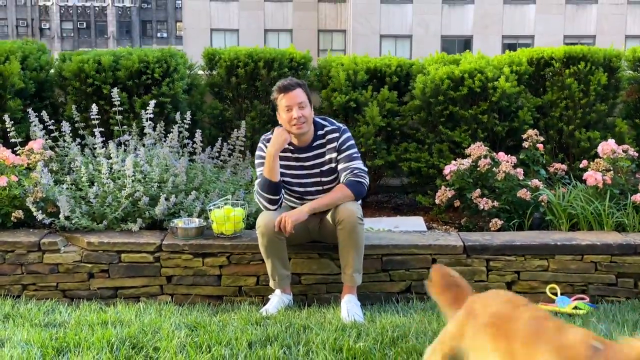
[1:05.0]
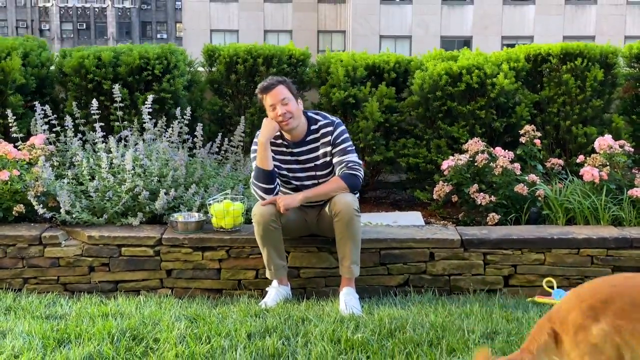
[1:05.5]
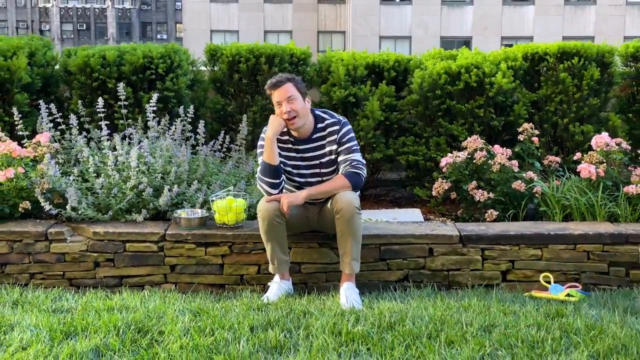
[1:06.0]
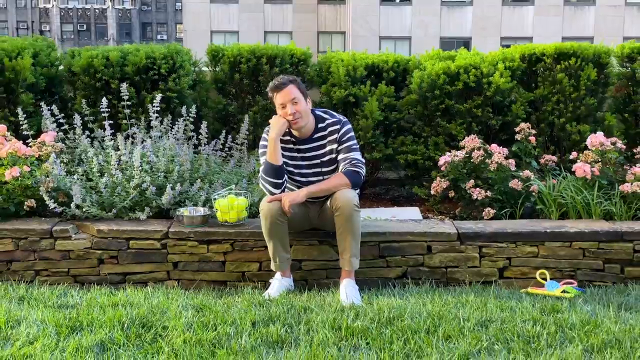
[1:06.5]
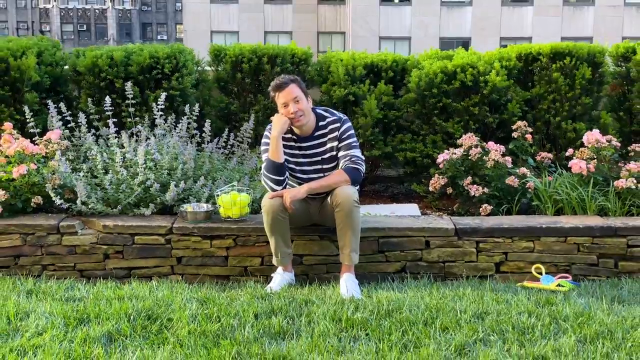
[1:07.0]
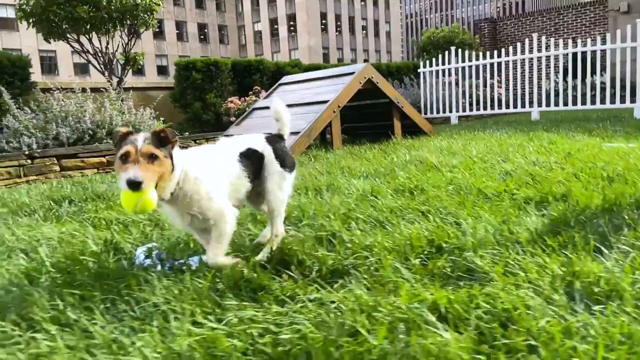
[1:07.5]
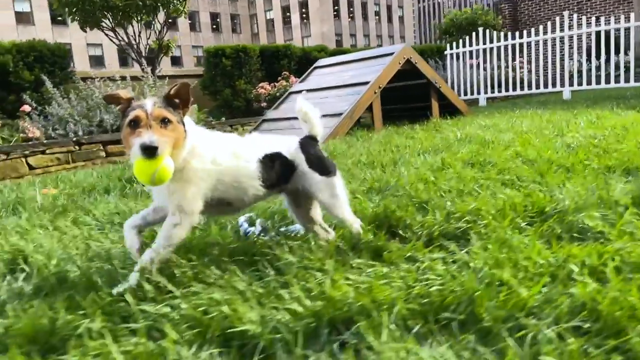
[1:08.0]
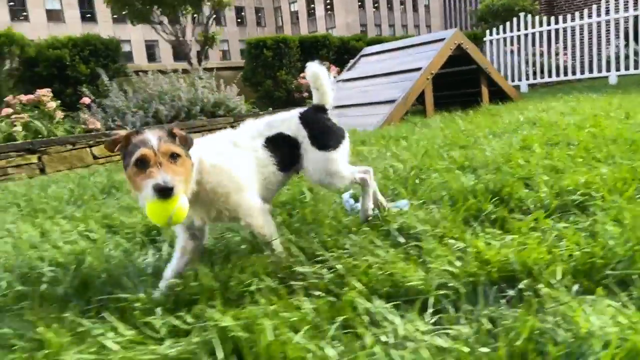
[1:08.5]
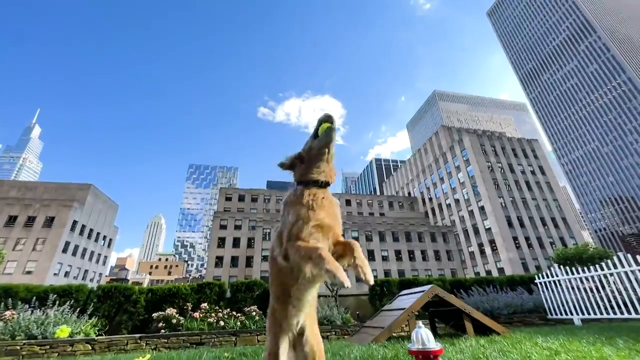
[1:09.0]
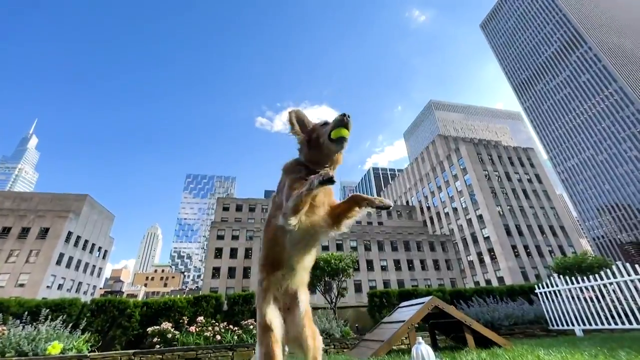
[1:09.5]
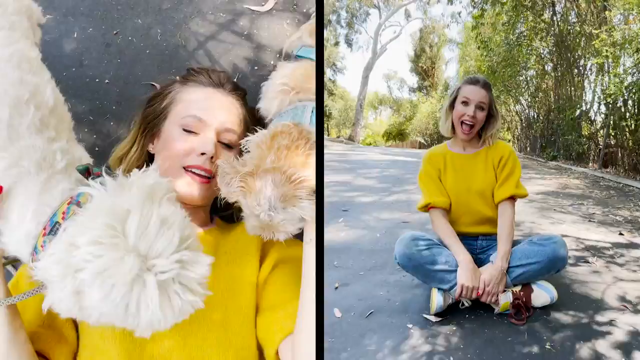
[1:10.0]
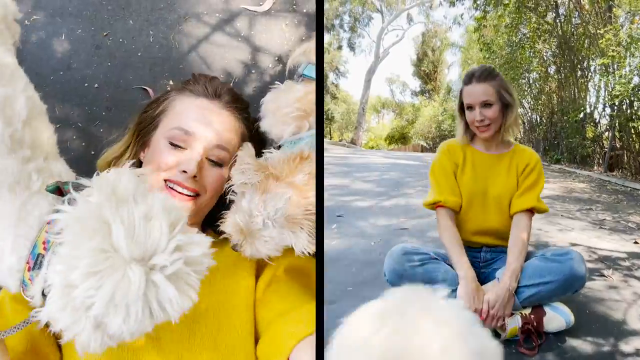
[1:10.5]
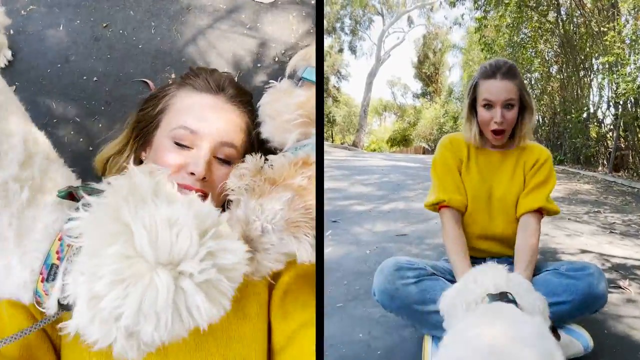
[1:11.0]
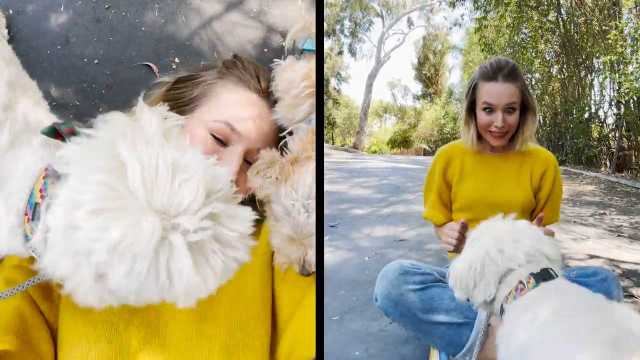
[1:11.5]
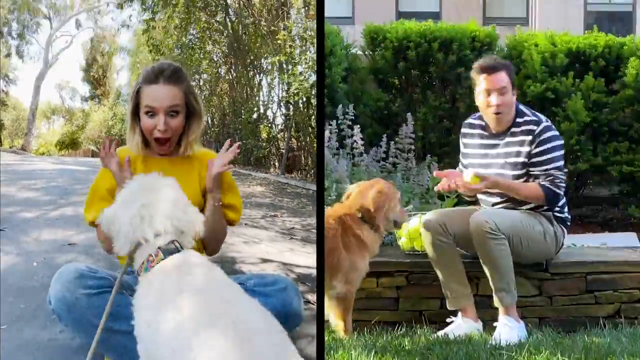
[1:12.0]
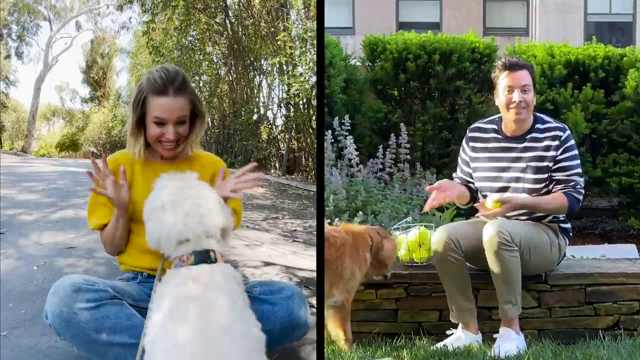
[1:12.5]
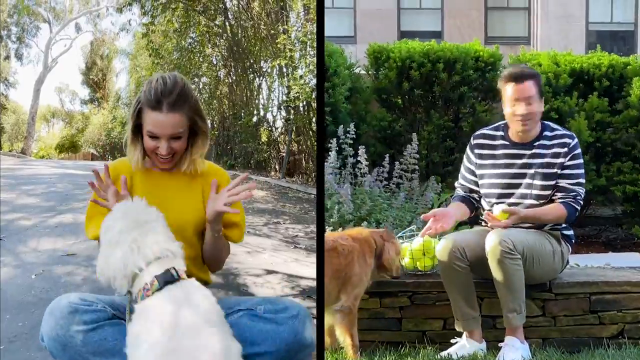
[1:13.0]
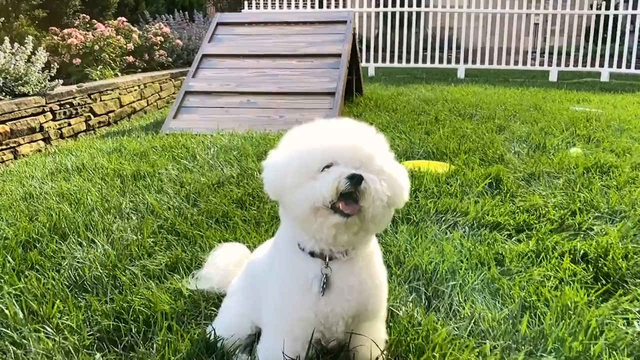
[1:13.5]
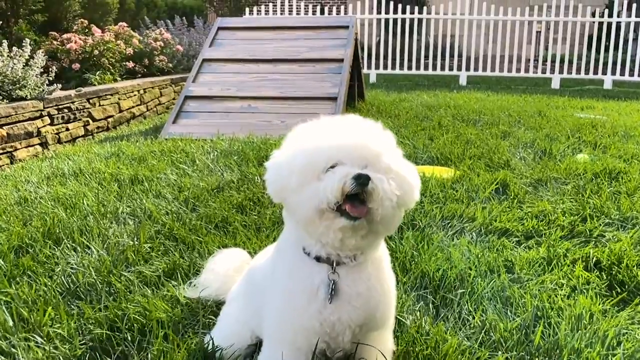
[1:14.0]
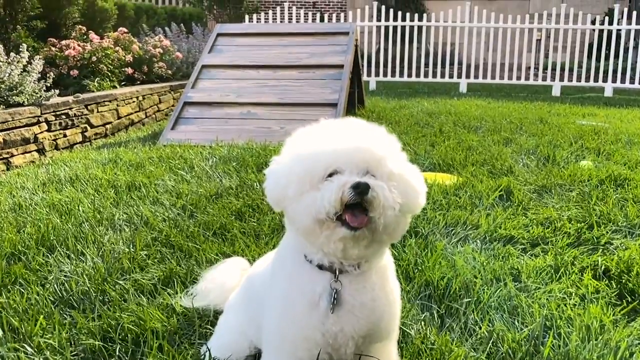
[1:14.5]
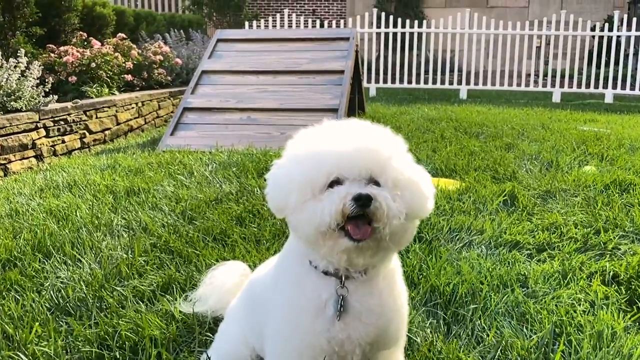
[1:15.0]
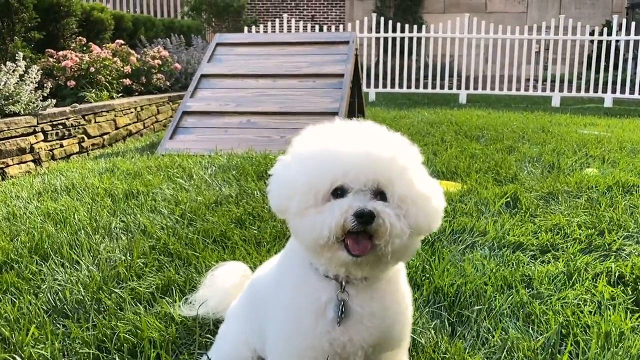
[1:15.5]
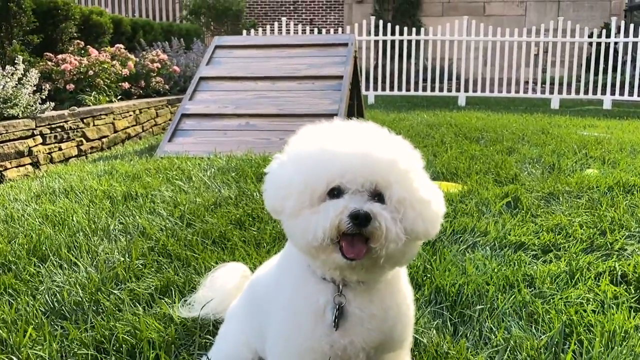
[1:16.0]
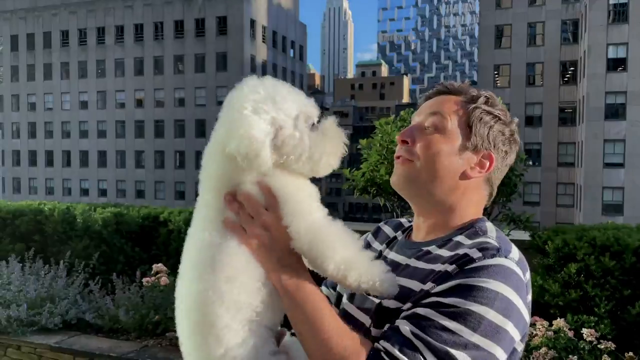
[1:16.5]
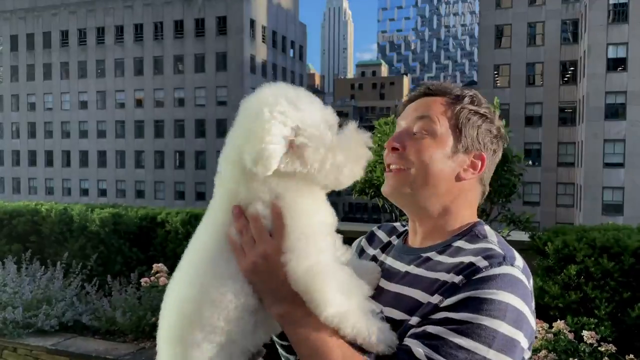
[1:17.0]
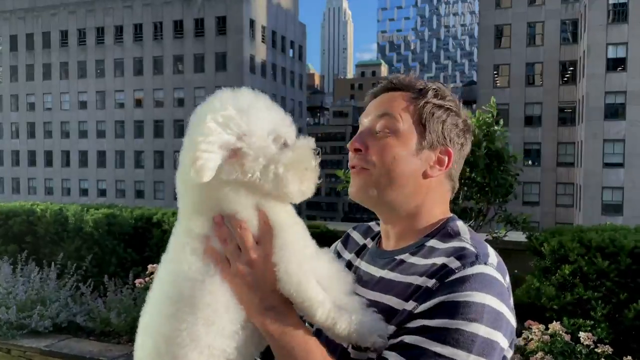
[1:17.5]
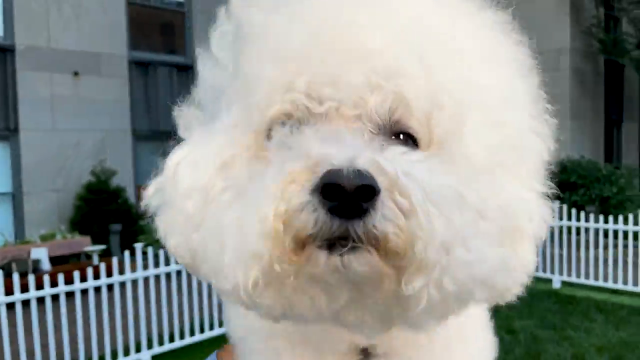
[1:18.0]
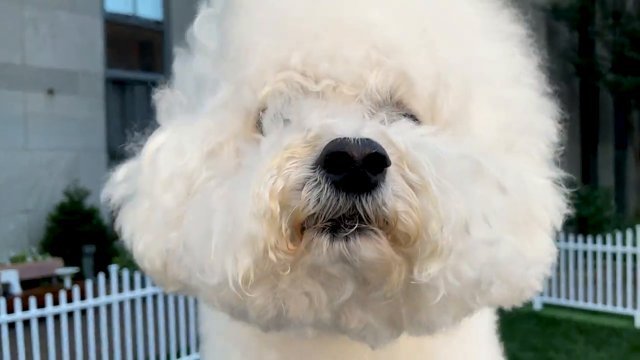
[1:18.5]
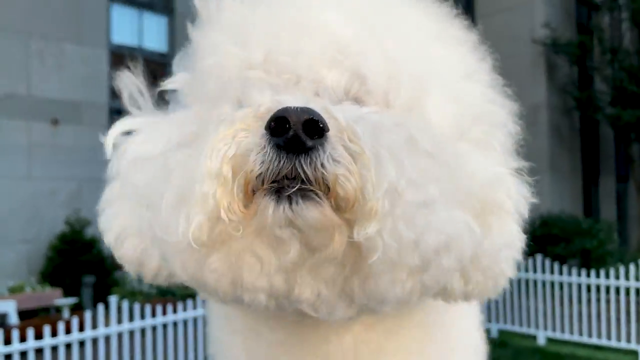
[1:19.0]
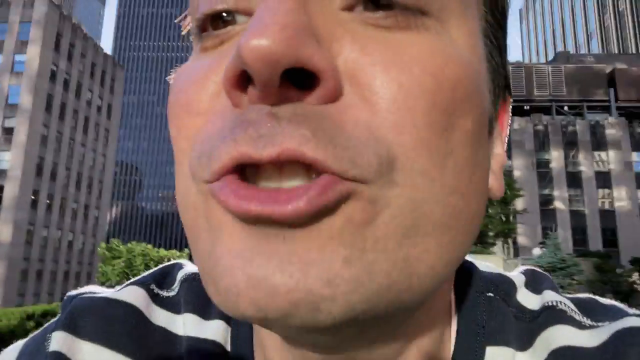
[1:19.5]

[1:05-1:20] The man sits on a brick wall at the dog park, with grass in front of him and little dogs playing. Next to him on the wall is what looks like a silver metal bowl, along with a wire basket full of bright green tennis balls. He talks as he sits there, and the camera pans to a little dog running in front of him carrying a tennis ball in its mouth; the dog is white with what looks like a big black spot on the side of its body. The camera pans to another dog, apparently a golden retriever, jumping into the air to catch a tennis ball. Next, the camera pans to a woman on a driveway petting a little white dog wearing a collar; she wears a gold yellow sweater and blue jeans and is talking. A split screen then shows the woman and the dog on the left and, on the right, the man at the dog park giving a golden retriever a tennis ball. The camera then pans to a fluffy little white dog sitting in the grass, panting, with a little ramp in the background.